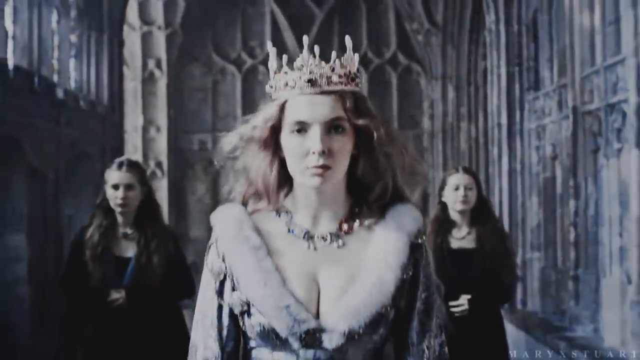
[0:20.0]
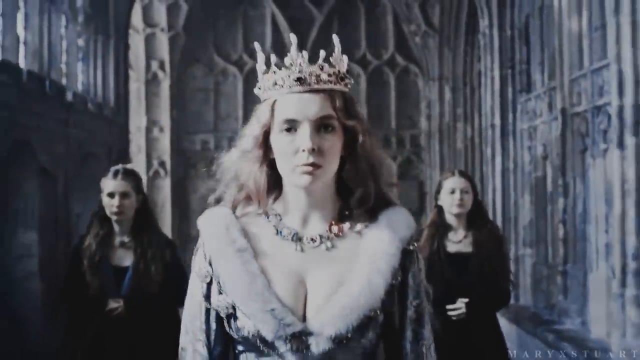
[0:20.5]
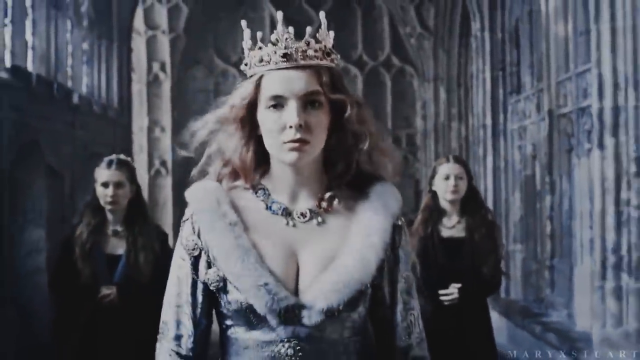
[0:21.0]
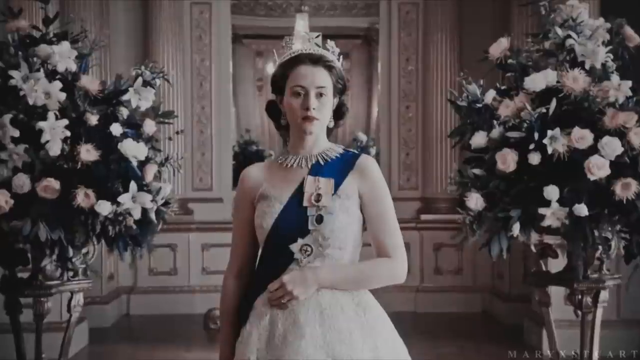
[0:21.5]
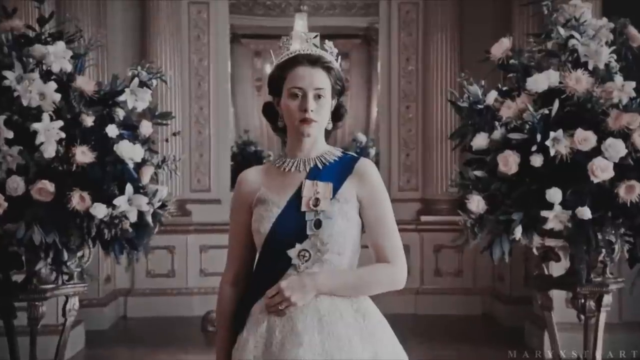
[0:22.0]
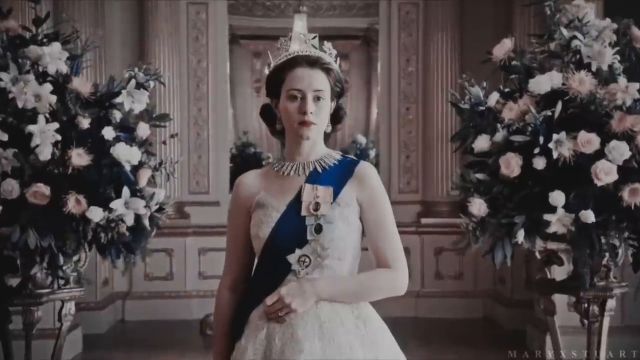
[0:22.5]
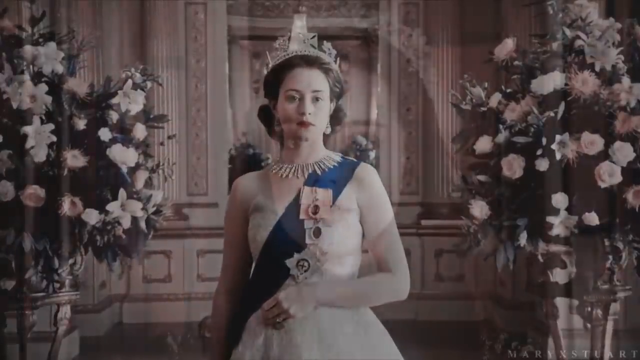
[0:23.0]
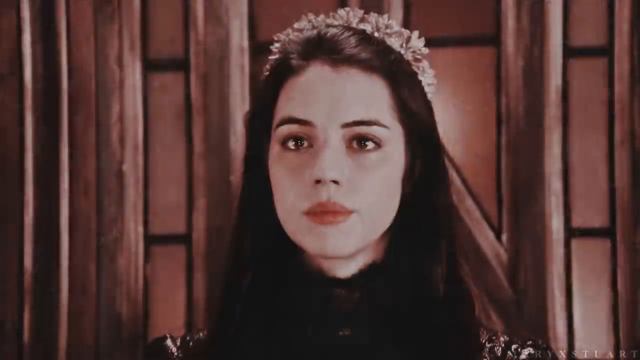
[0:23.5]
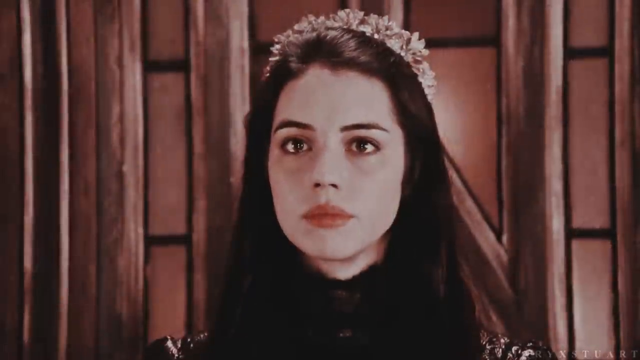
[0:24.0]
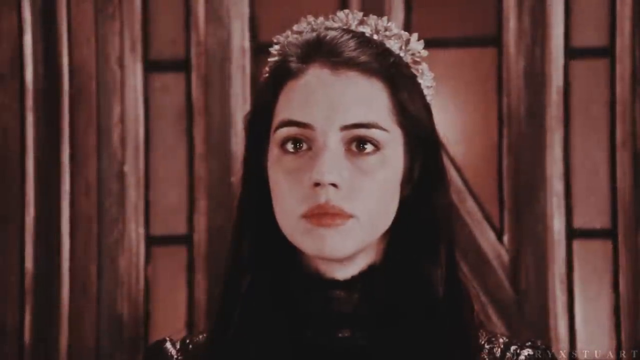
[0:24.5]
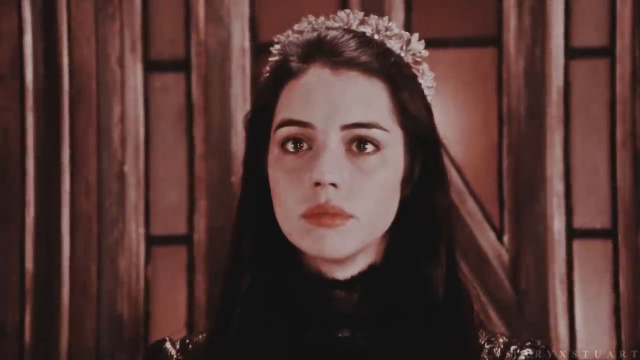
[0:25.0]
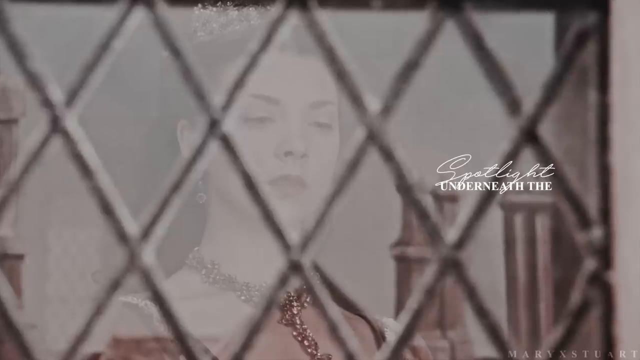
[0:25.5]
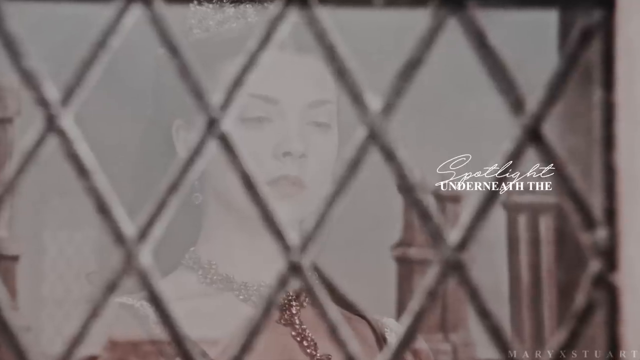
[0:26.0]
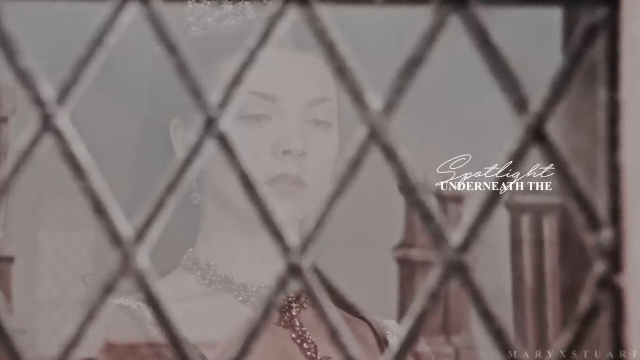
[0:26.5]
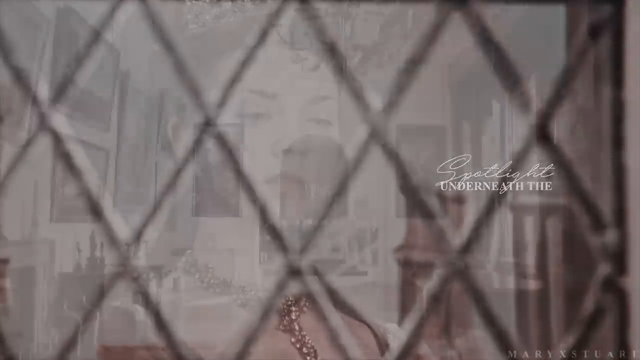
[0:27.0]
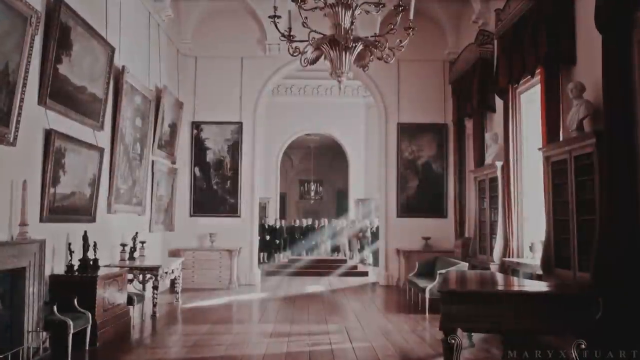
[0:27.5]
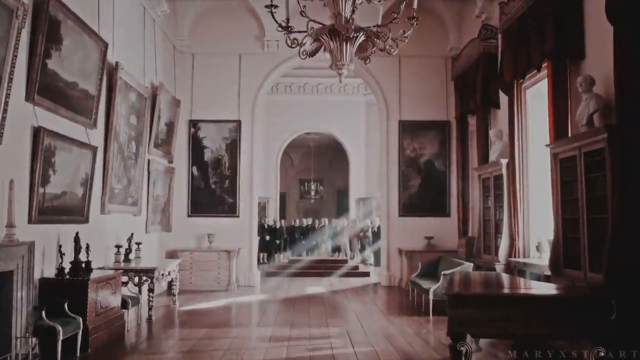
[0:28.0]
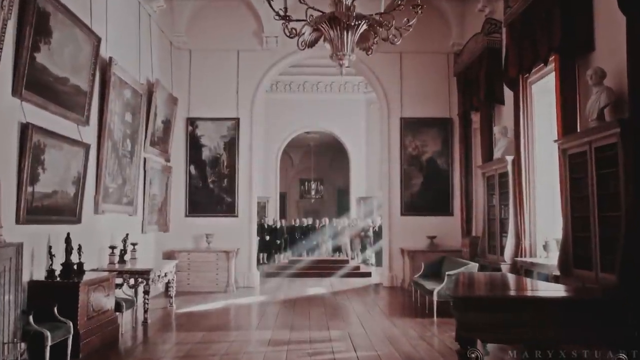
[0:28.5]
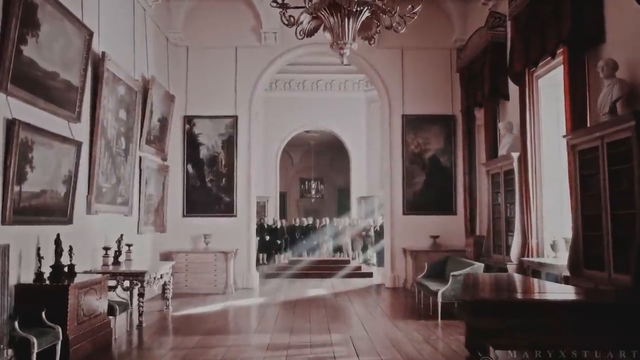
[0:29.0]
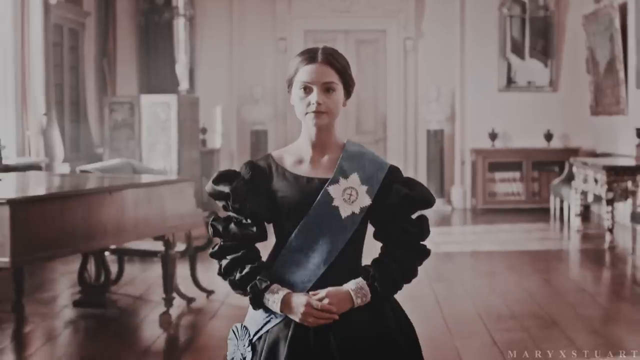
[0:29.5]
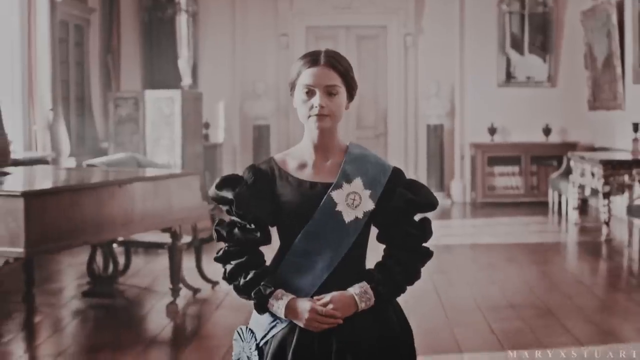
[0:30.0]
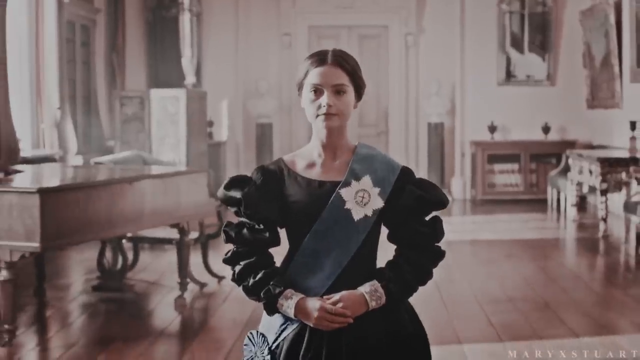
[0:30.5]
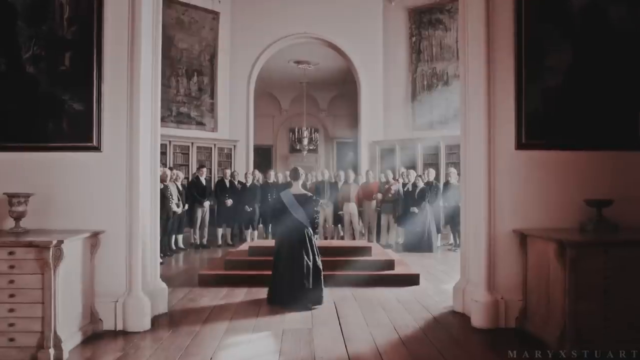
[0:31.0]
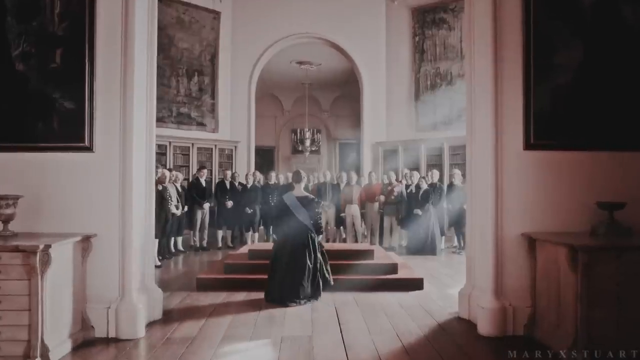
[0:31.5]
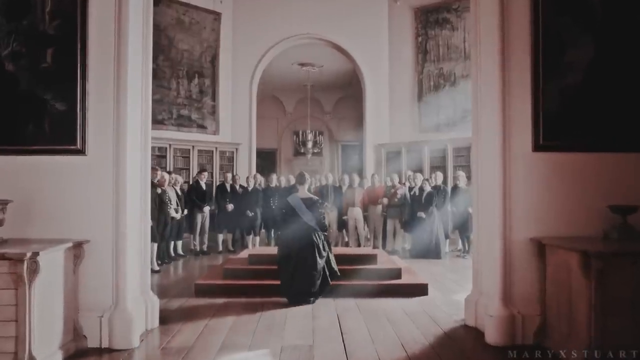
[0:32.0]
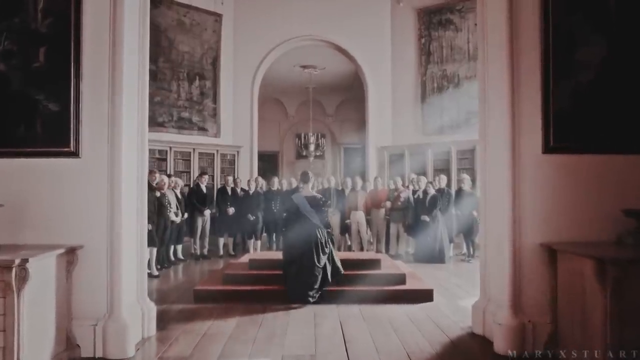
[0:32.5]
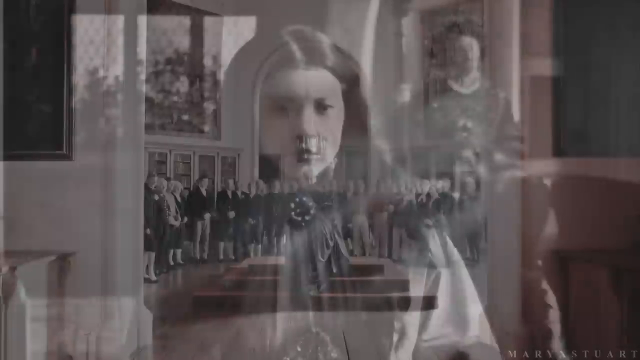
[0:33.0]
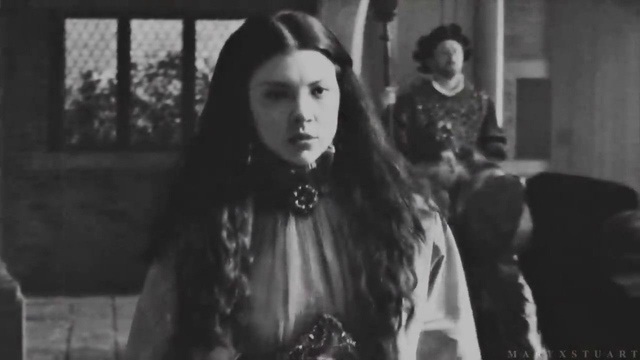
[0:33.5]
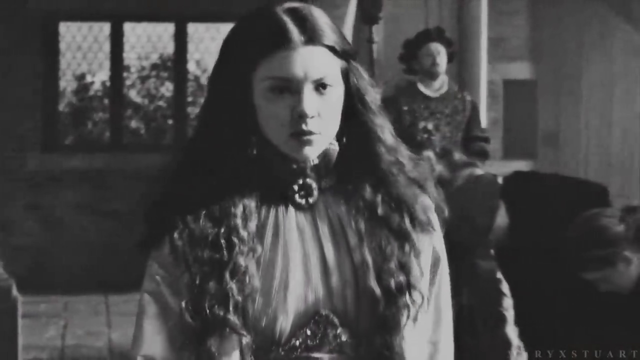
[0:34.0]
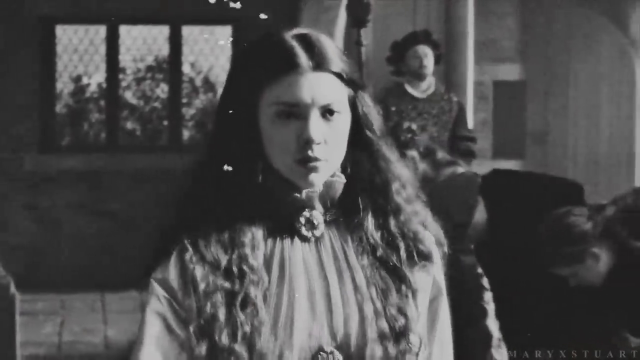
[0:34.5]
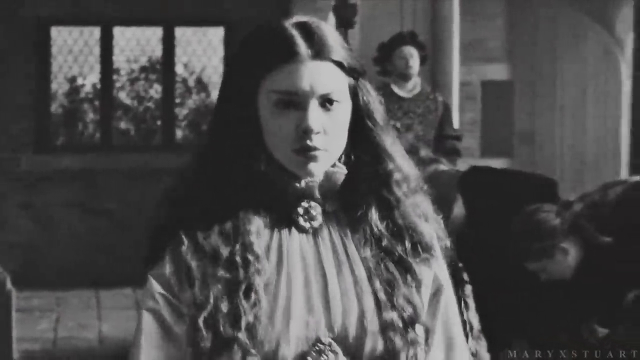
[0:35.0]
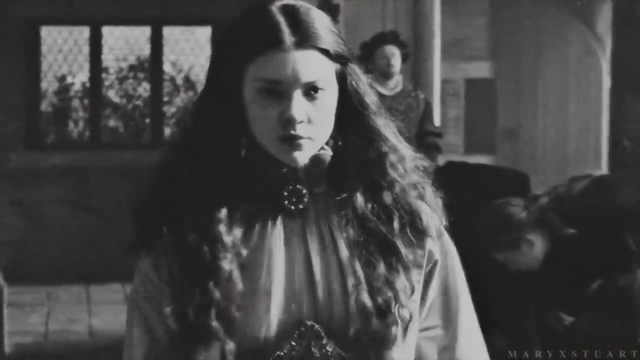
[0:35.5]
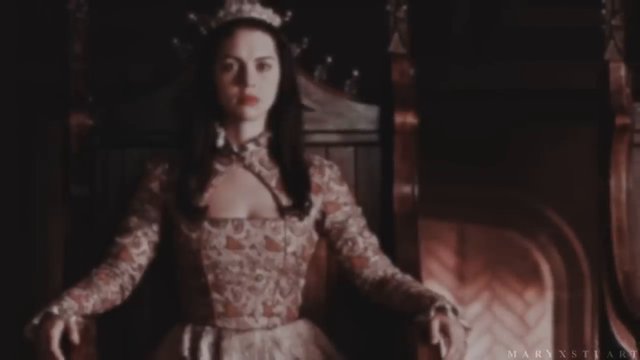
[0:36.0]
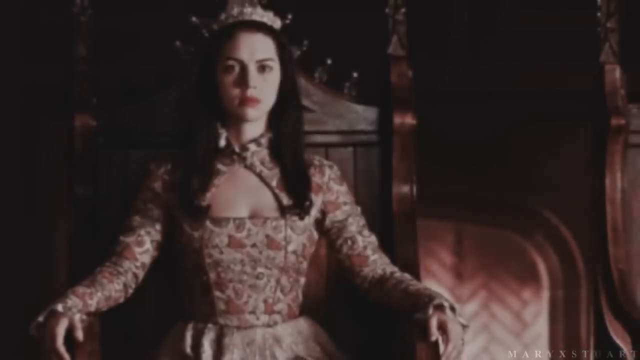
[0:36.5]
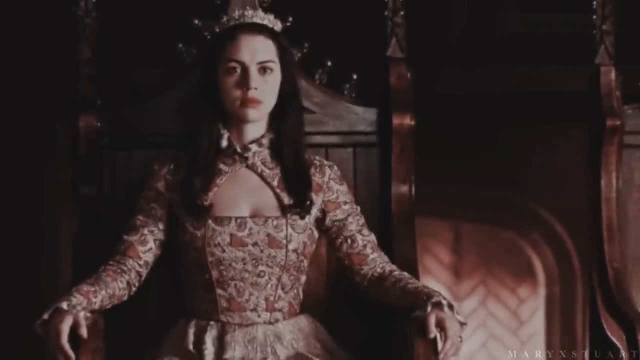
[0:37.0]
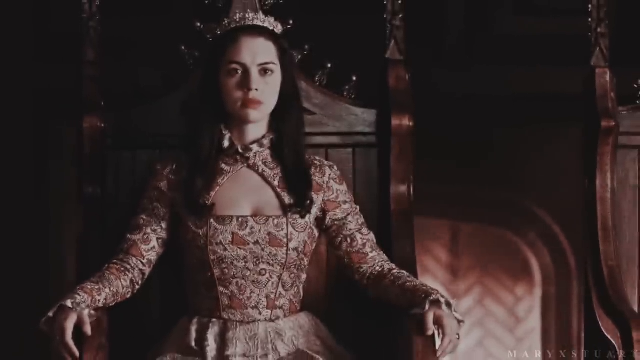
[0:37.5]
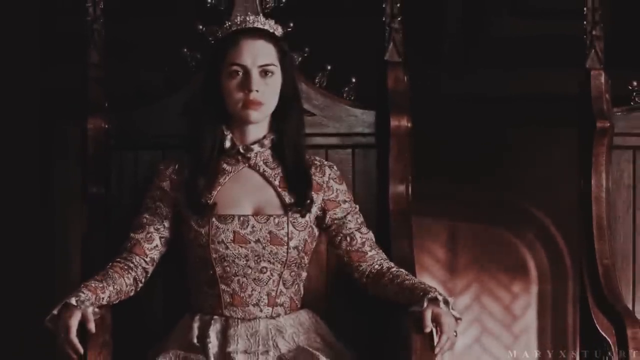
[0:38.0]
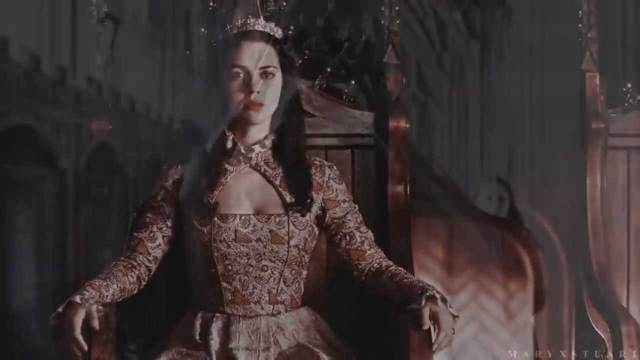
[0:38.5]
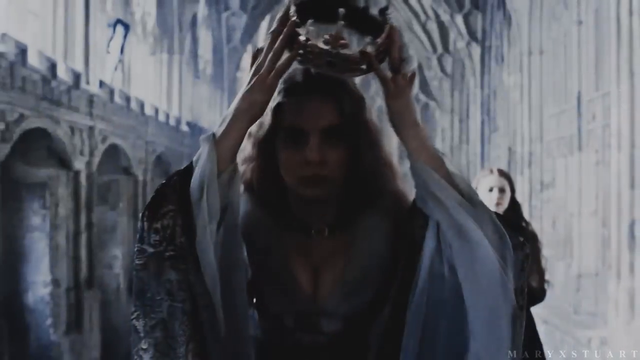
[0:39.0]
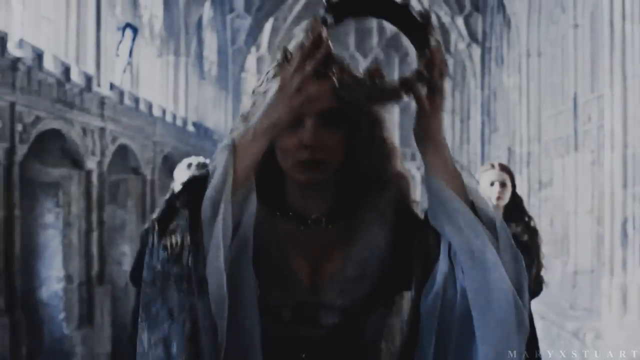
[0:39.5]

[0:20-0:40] A woman dressed like a queen is in the center, wearing a crown, her blondish-brown hair kind of blowing behind her. She is probably around 30. She wears a low-cut gown with something like fur around the collar, which droops down to the center of her chest. She has a serious look on her face and is seen from the chest up. She appears to be in some sort of castle with high walls and what looks like stained glass in the upper left. Two women walk behind her in sort of a triangle formation; both wear what look like very dark dresses, have long brown hair and look very serious. The video then cuts to another serious-looking woman dressed as if for a Miss America pageant, with a blue sash over her left shoulder draping diagonally across her chest over a white dress. She also has a tiara-type item on her head, and there are giant flower arrangements on either side of her. The camera slowly zooms in on her before the video moves to another shot.